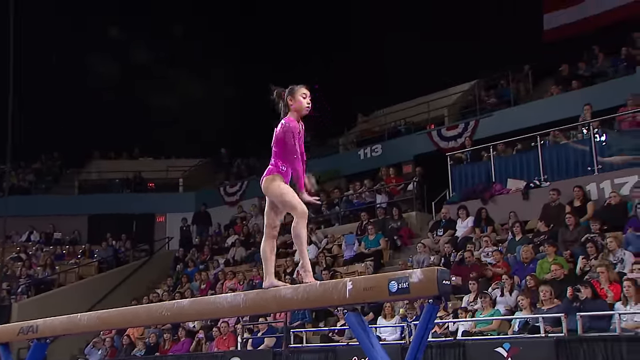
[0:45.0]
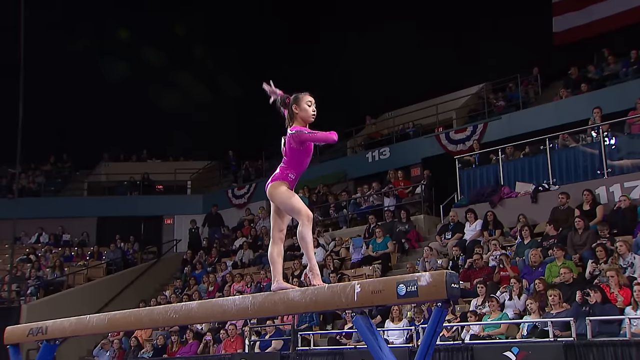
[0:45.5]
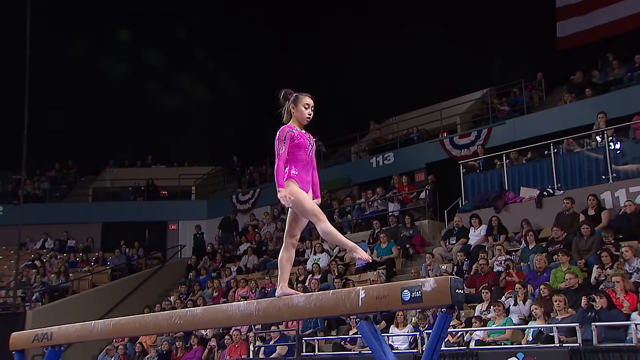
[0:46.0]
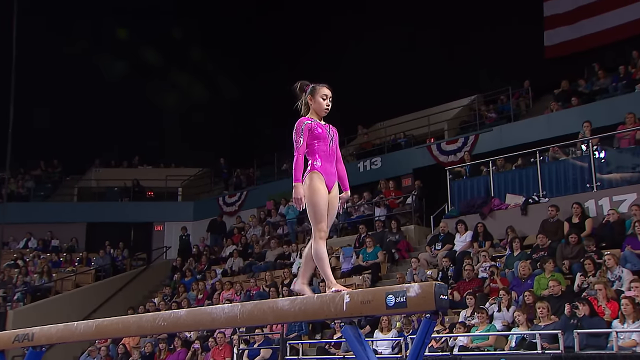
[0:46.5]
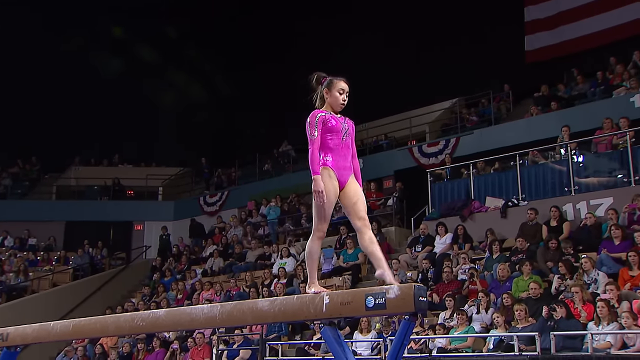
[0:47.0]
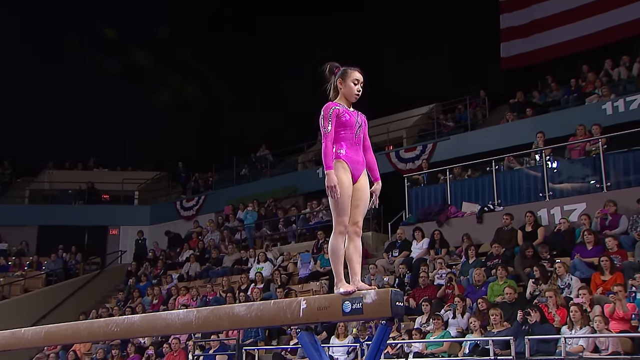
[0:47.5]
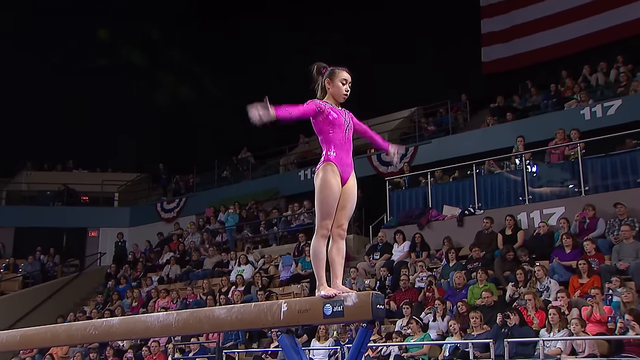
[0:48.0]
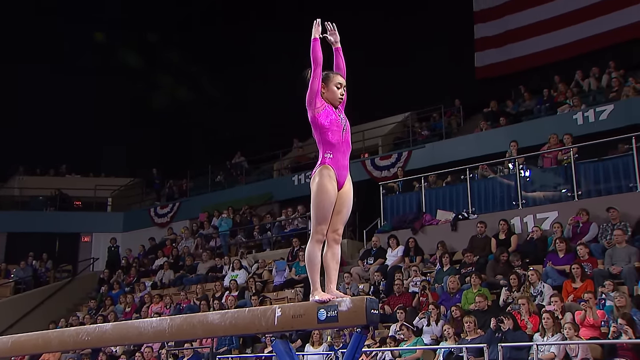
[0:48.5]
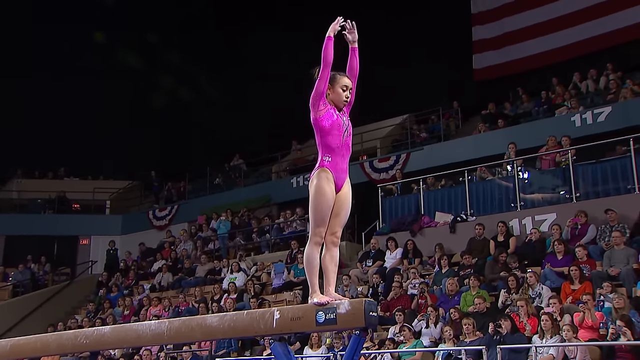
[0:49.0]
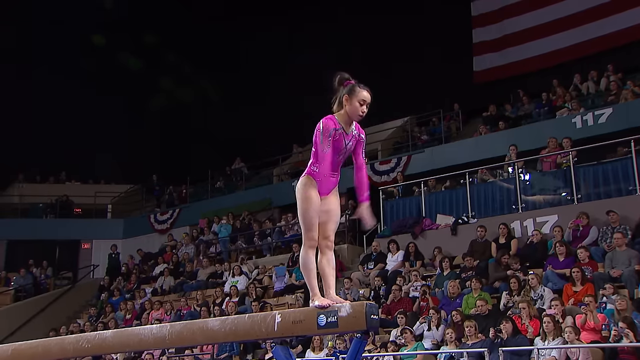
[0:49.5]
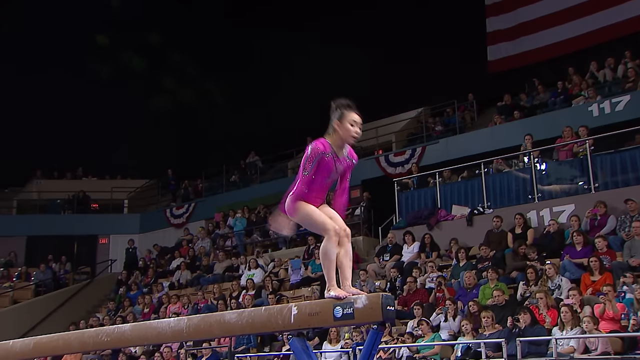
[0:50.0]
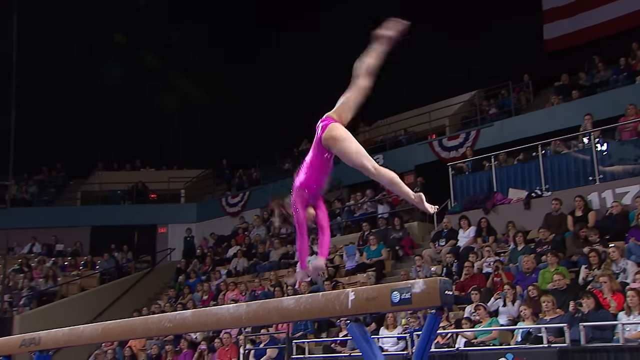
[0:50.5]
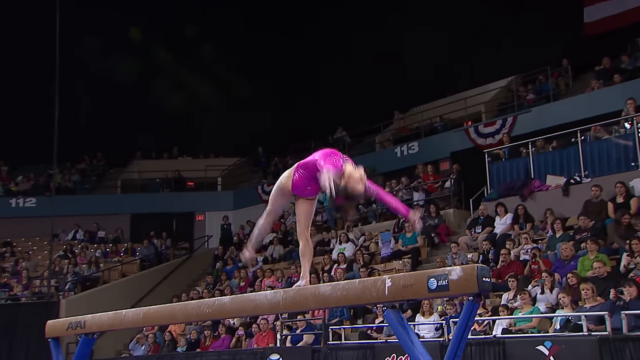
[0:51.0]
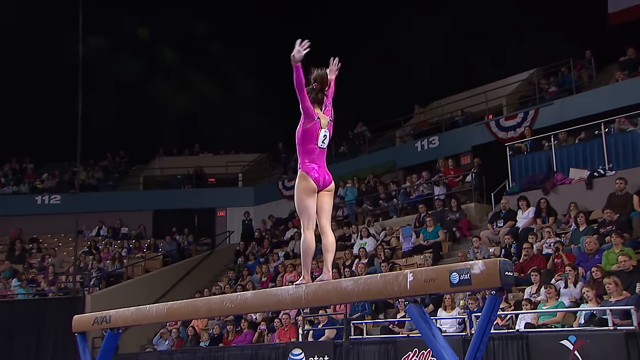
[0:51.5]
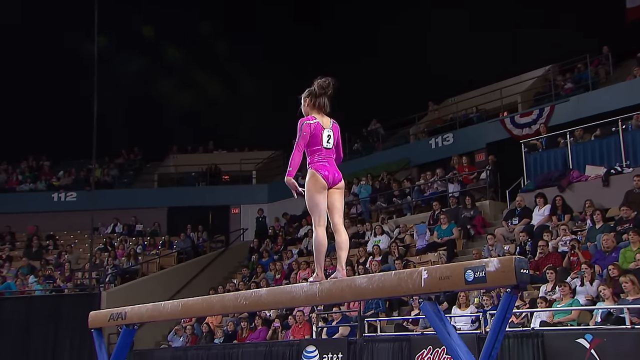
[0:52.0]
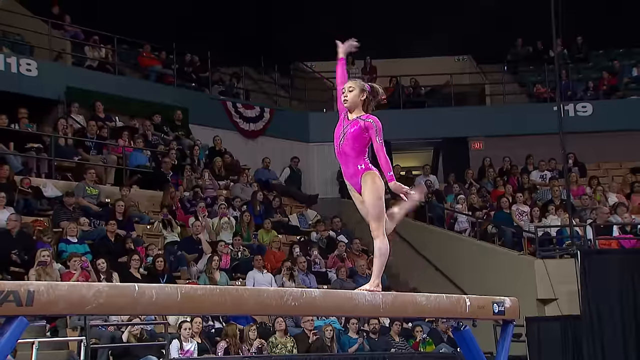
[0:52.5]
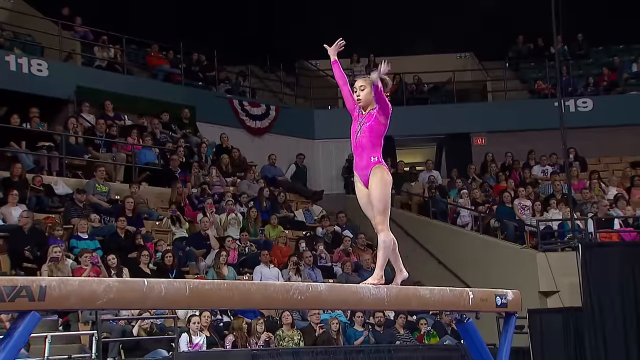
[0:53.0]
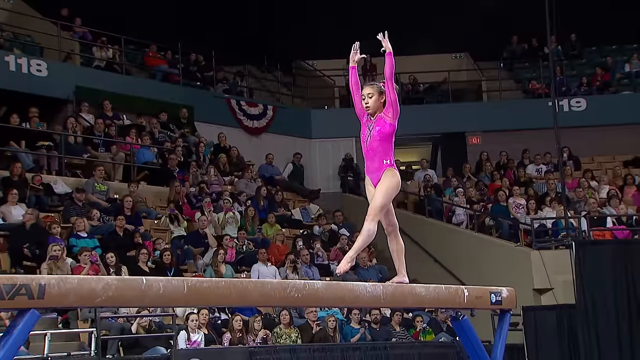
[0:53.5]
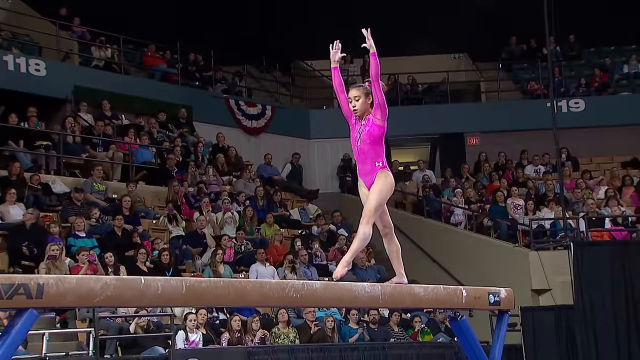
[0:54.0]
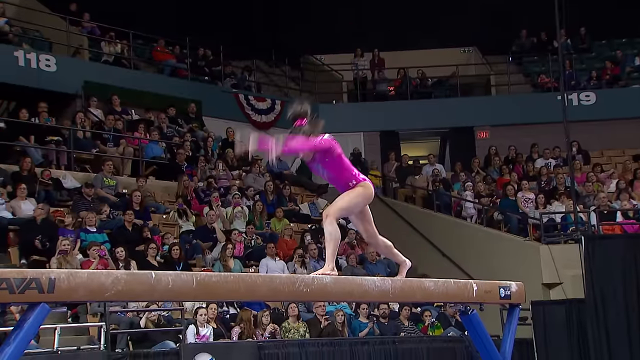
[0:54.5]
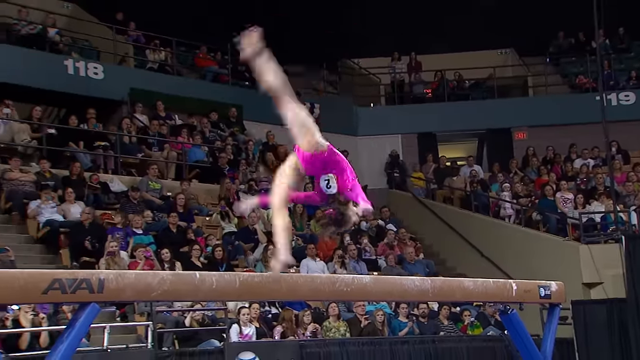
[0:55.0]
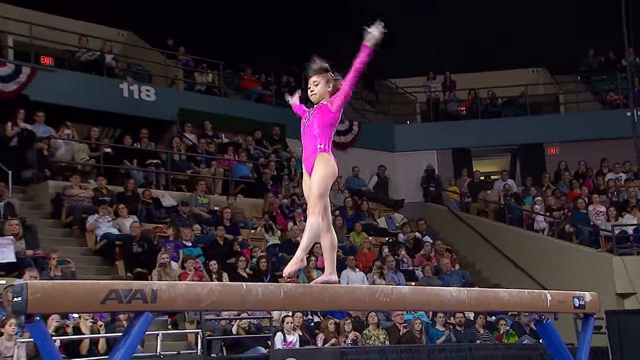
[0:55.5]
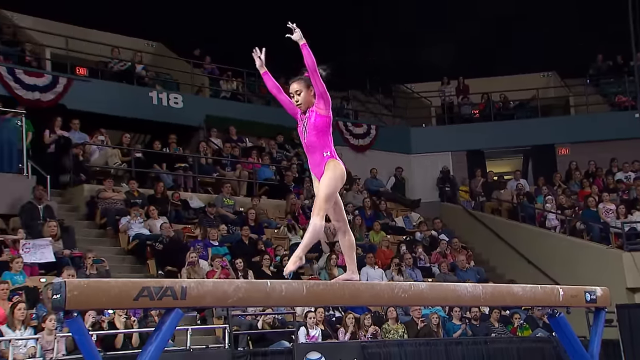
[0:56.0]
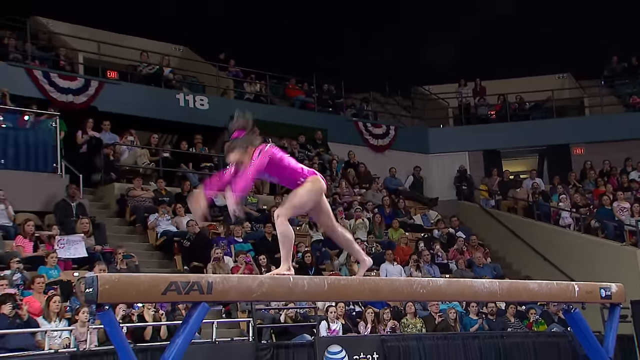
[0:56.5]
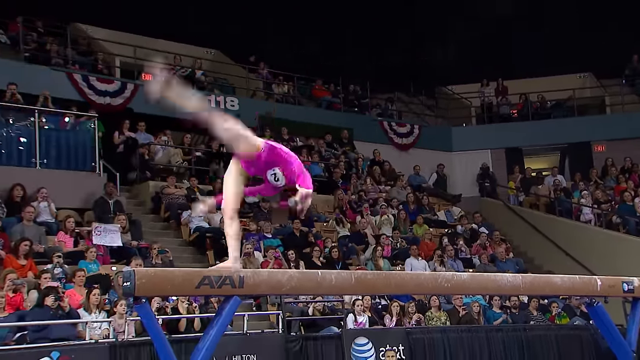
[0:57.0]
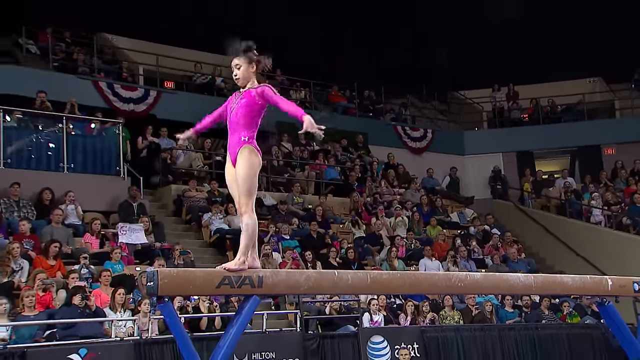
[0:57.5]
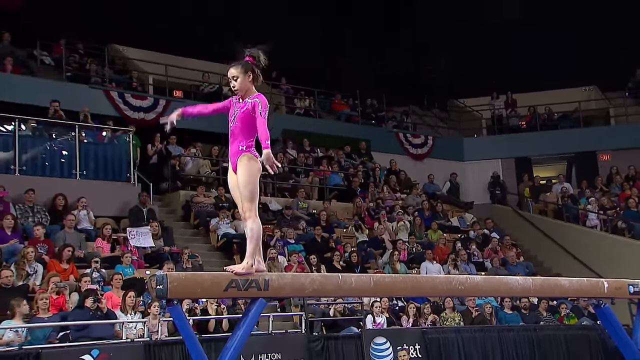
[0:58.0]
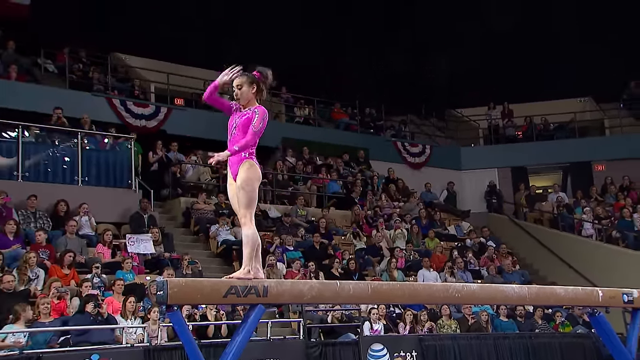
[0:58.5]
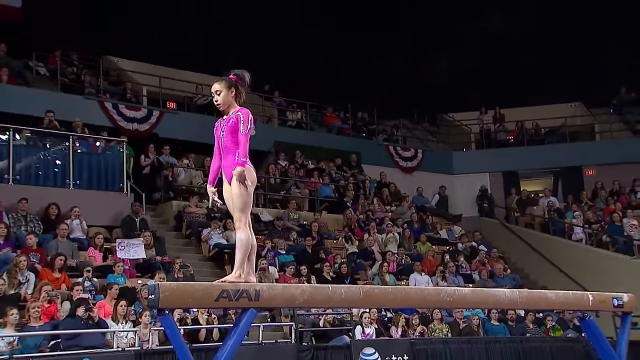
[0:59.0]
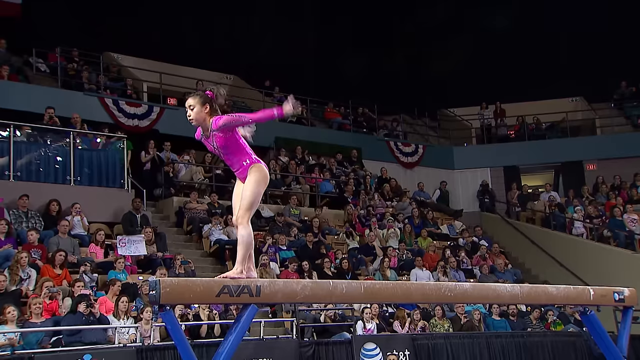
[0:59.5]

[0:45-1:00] The gymnast kind of prances on the beam, tiptoeing with her arms in the air, then flips backwards. She jumps forward in a kind of flip, then flips again as her arms and legs twist about. She steps with her arms in the air, does a backflip with her legs twirling, tiptoes, and flips repeatedly on the beam. She jumps in the air with her legs sticking up behind her and keeps flipping, her bun kind of twirling. She poses with one arm crossed in front of the other, then flips several more times with her hands in the air and does a kind of twirl with her hands. An icon is in the lower right of the screen. She pushes her hands kind of into each other, facing each other, tiptoes, and does another flip in which her hand kind of touches her foot, somersaulting.